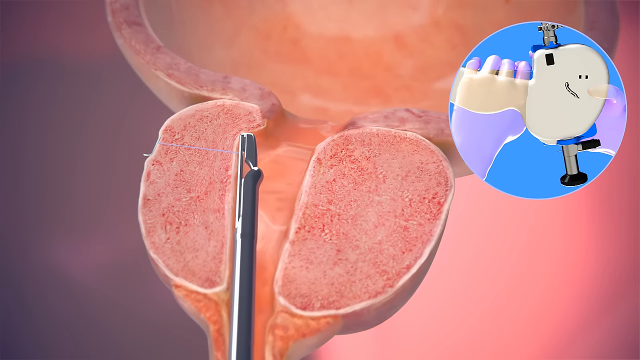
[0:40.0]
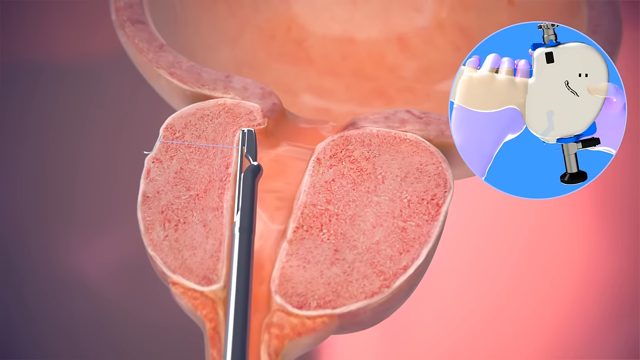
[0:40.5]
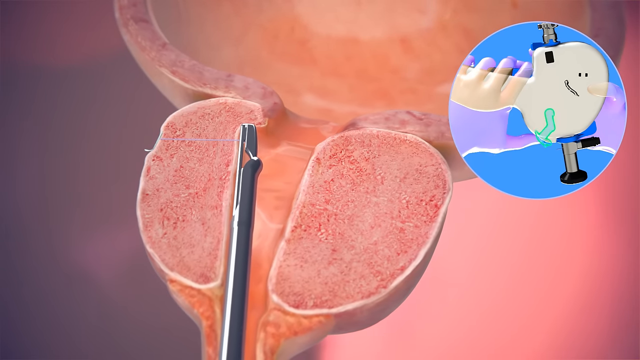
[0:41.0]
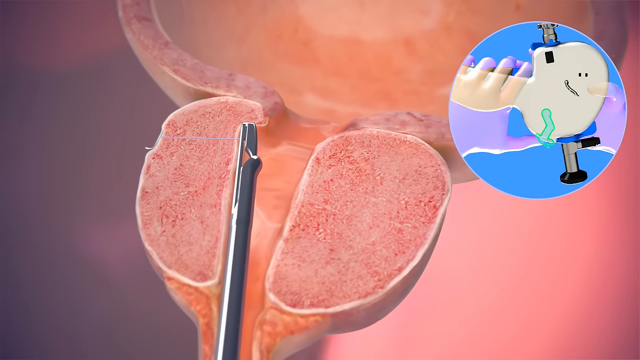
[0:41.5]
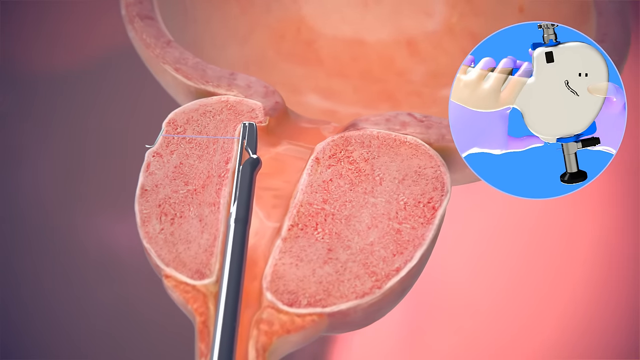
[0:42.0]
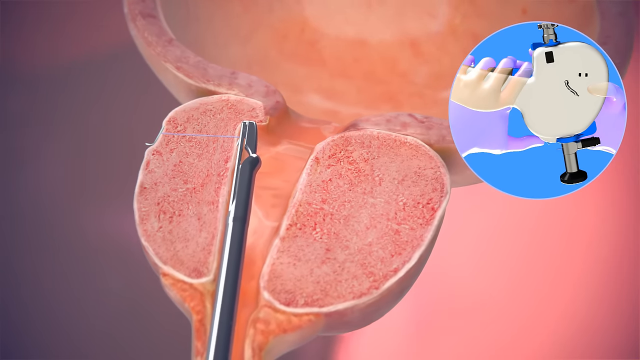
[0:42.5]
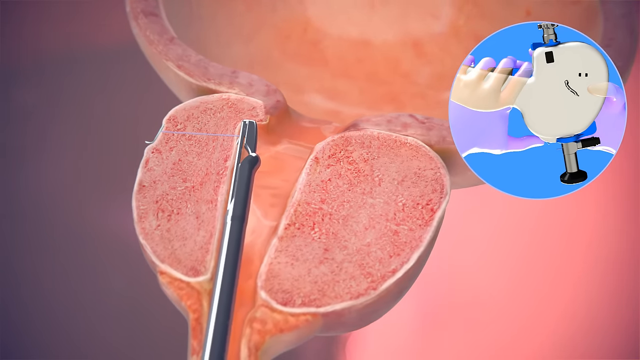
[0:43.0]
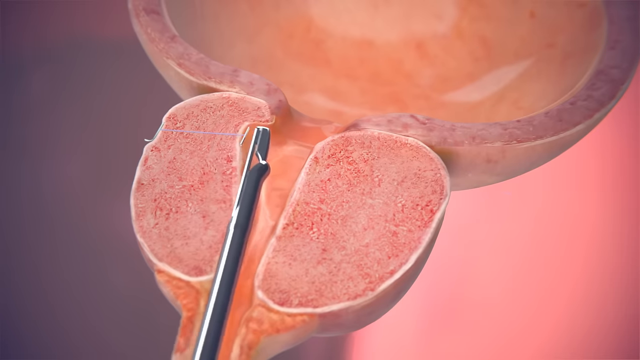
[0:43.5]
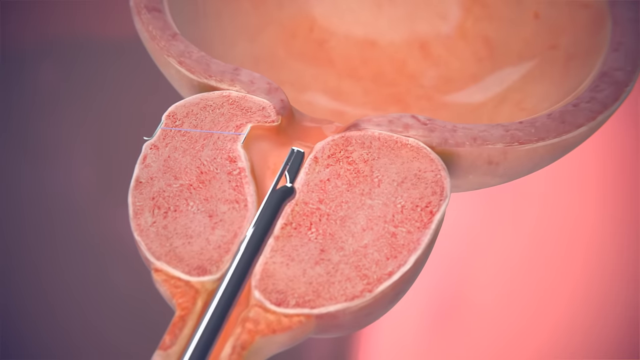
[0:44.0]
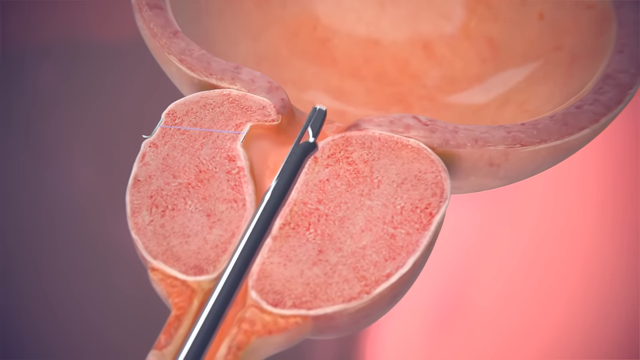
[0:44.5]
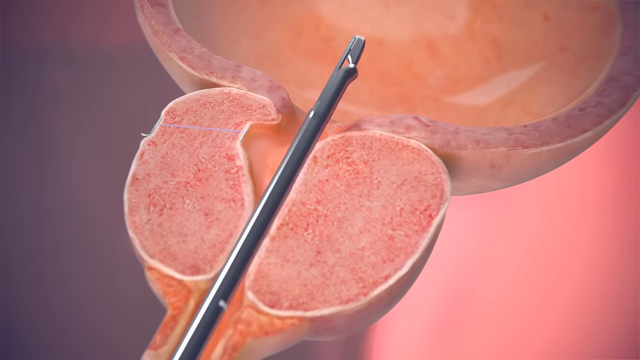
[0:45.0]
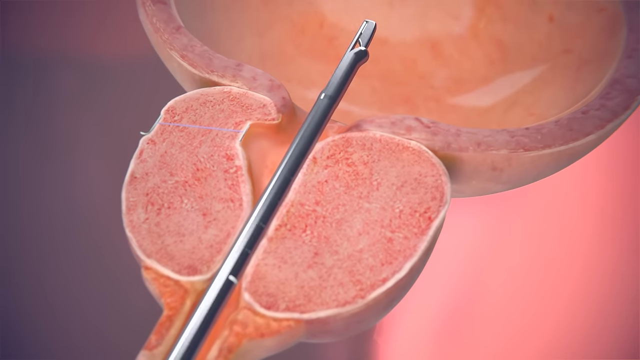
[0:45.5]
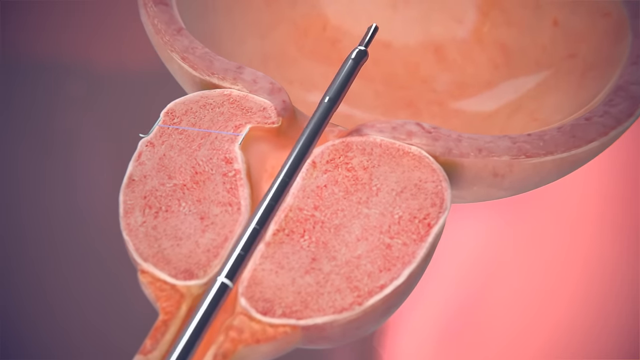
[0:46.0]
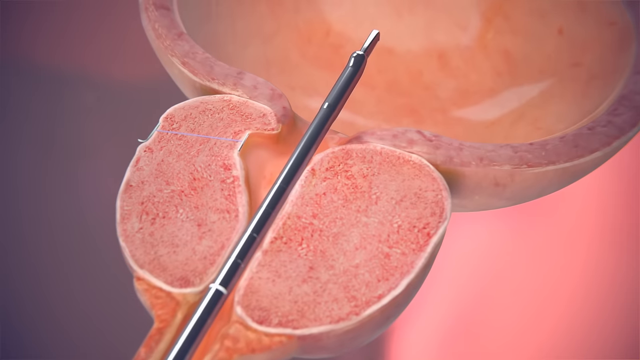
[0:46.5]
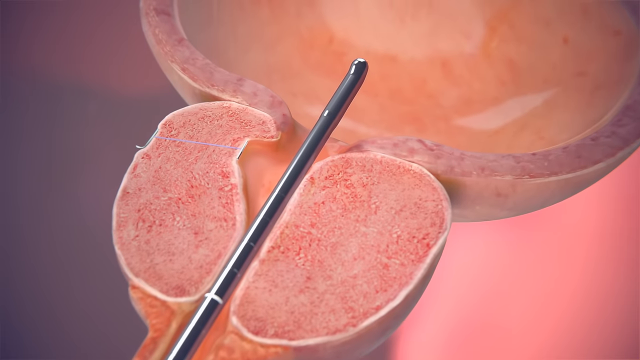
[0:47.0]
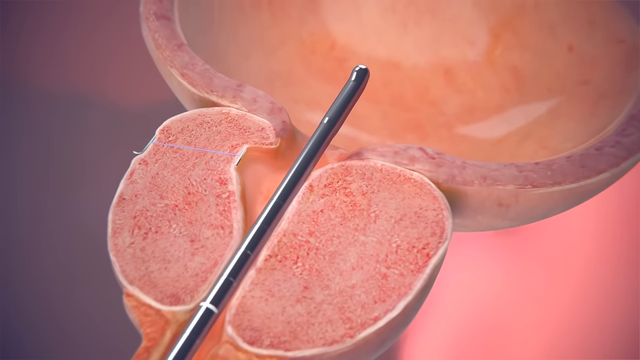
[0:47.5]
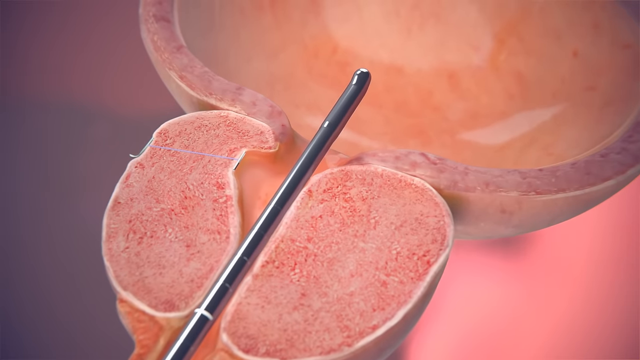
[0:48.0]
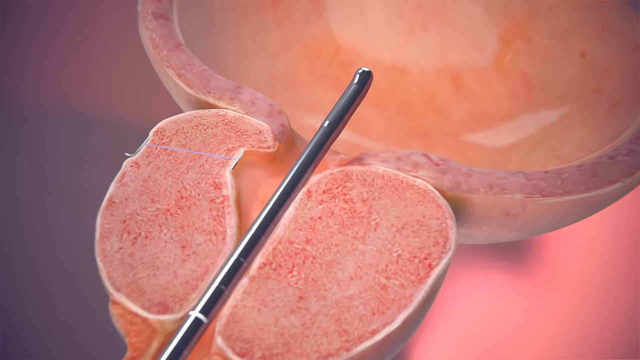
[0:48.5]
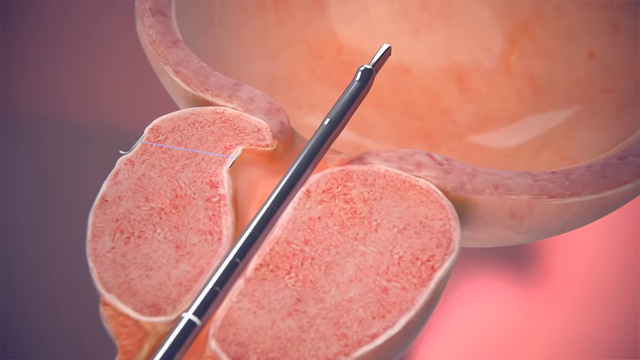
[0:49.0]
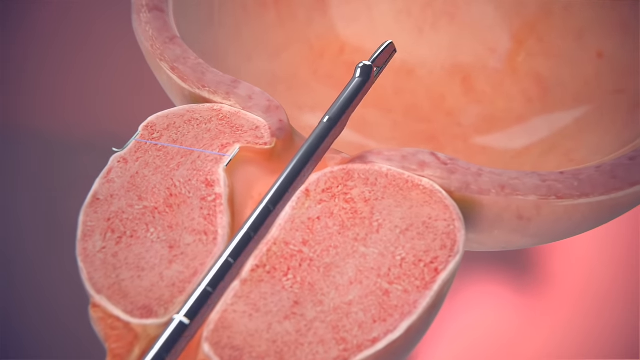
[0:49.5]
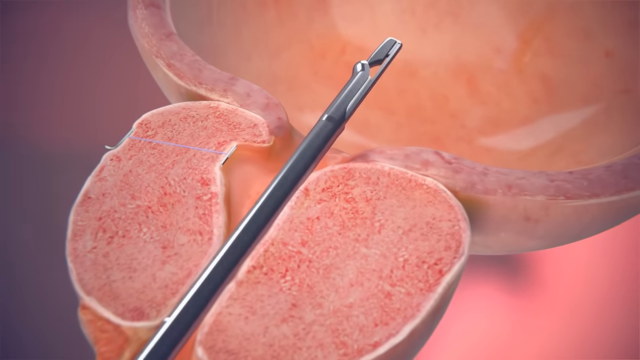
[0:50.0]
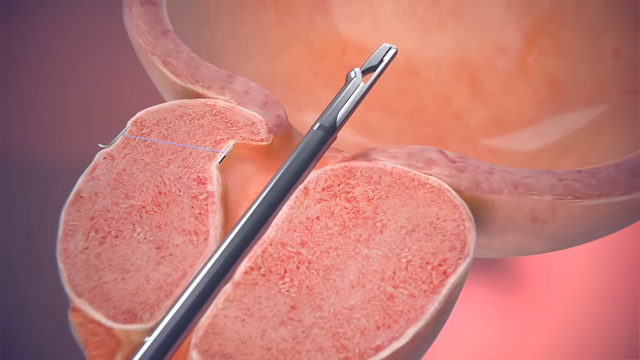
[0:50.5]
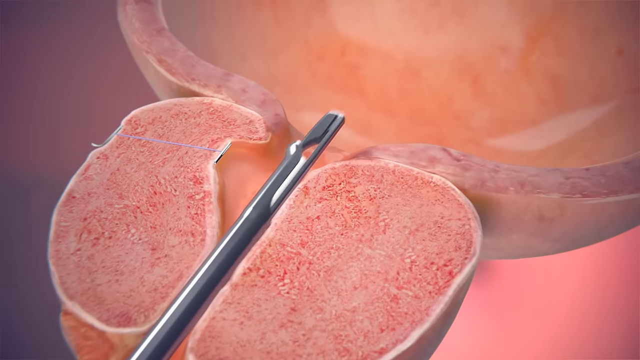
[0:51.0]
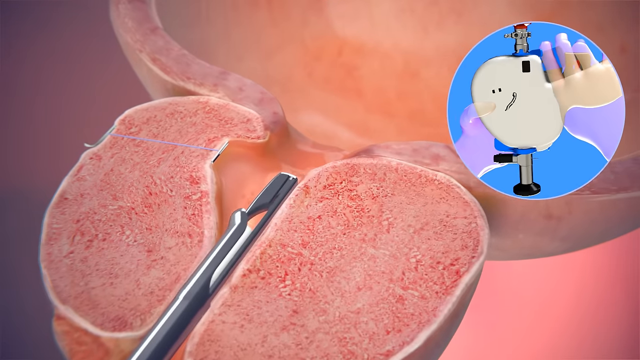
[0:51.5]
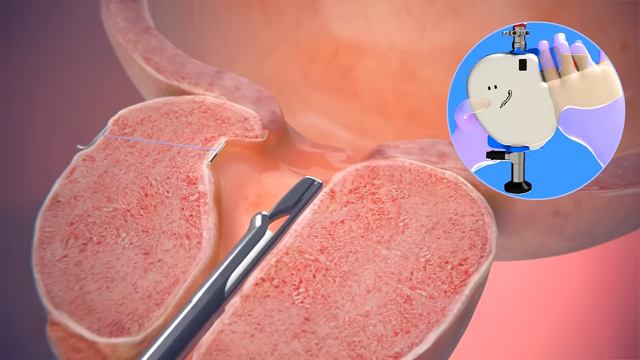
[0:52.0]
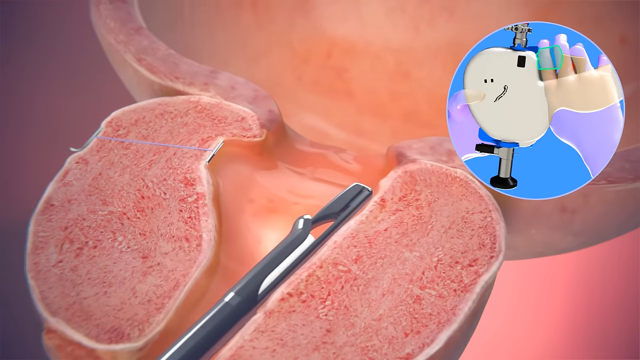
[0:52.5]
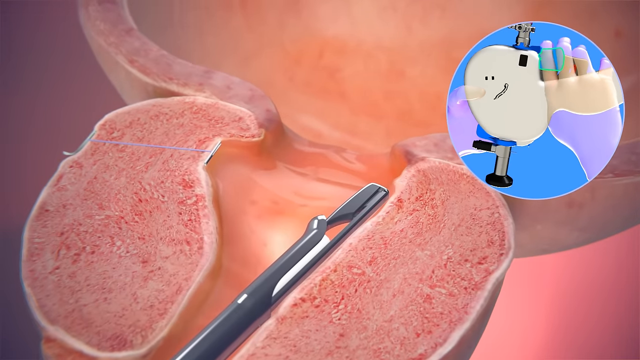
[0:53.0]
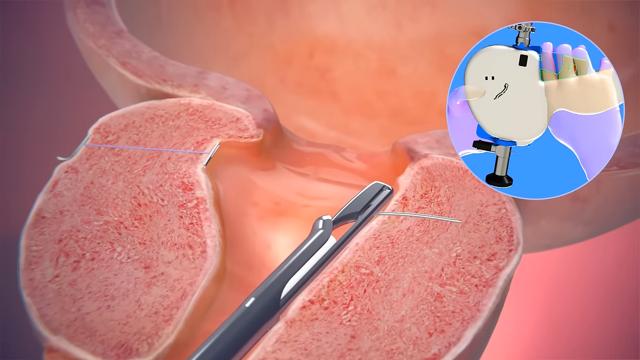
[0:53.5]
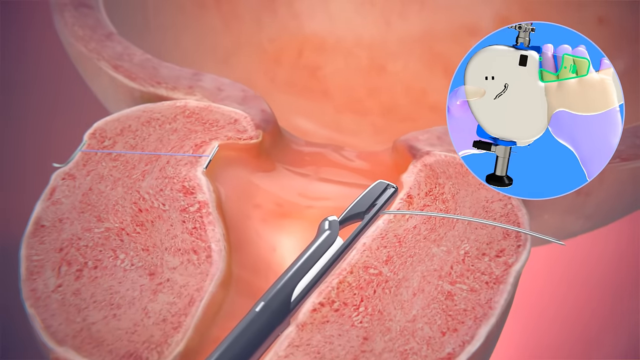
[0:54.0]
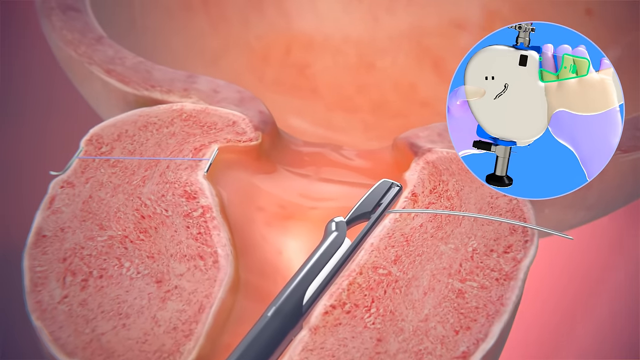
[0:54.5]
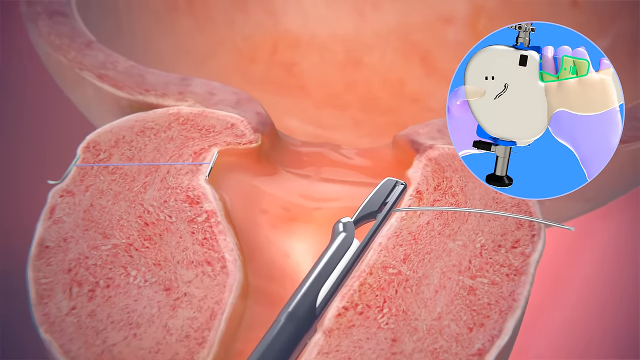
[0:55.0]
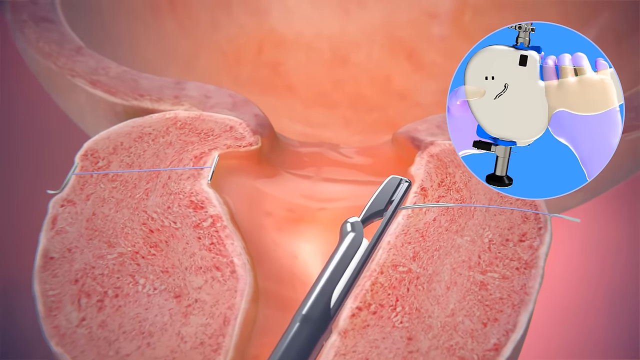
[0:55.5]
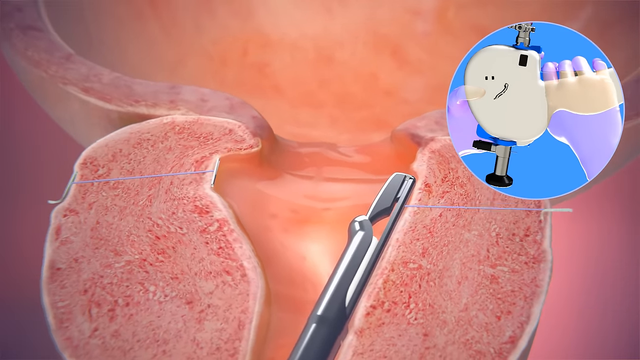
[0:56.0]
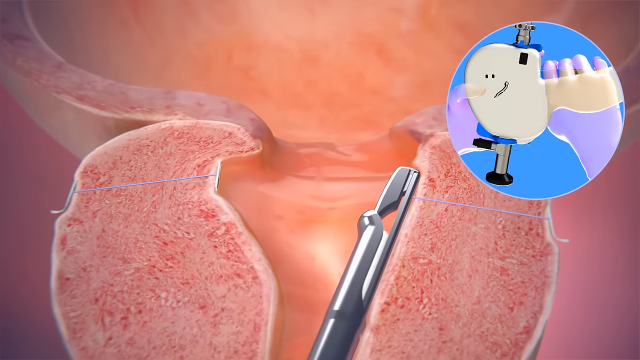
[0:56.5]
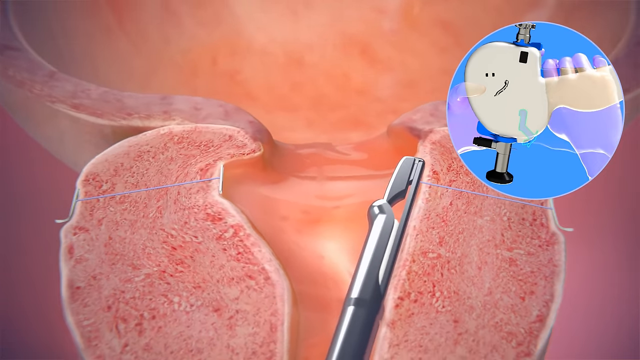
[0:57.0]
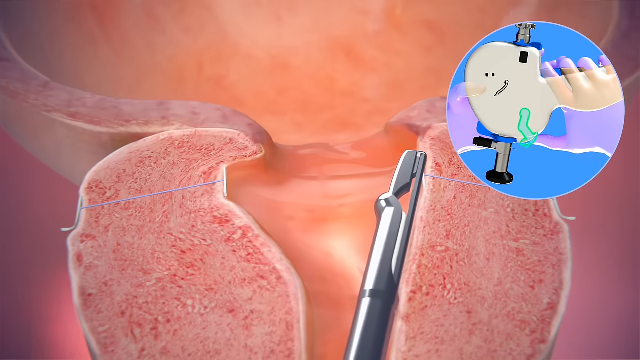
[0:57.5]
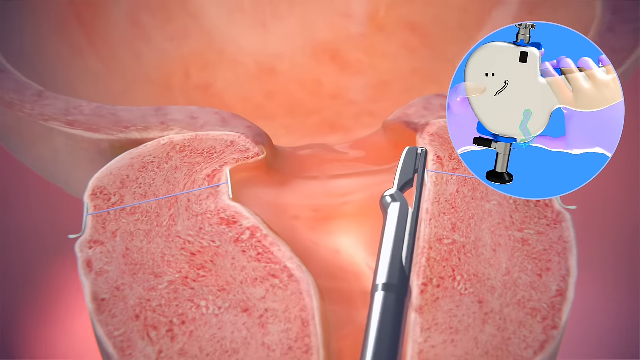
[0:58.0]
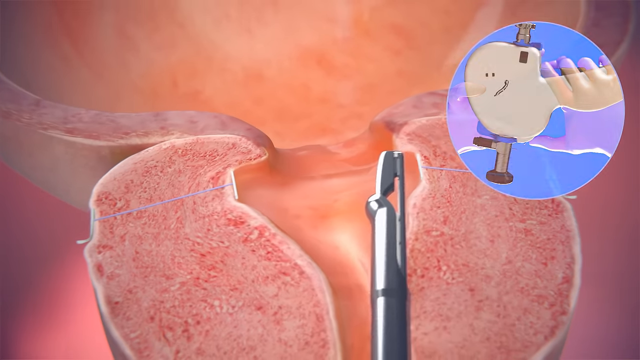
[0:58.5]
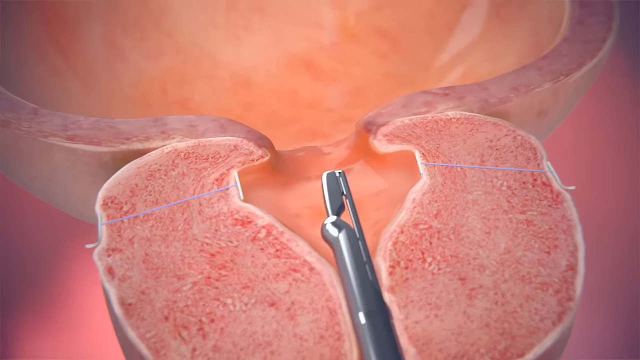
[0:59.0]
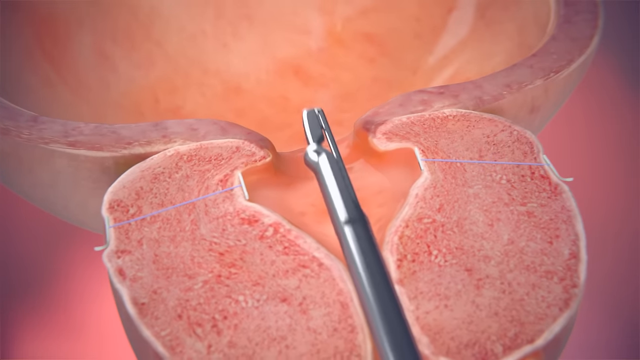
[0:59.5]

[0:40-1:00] An animated illustration shows a human prostate gland with a medical device performing a procedure. The prostate is sliced open to show the inside. The device looks like a slim metal rod pushed through the opening of the urethra, with the swollen prostate glands to its left and right. The device is inserted further into the bladder area, twisted around and rotated, then pulled back and pushed to the right side, opening the narrow passage even wider. Meanwhile, an inset like a pop-up image in the upper right corner of the screen shows a pair of purple-gloved hands operating the device from the outside. The device is then inserted further in again.